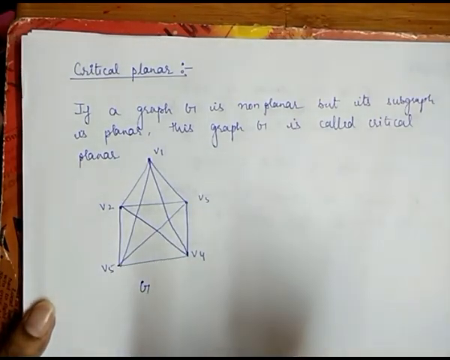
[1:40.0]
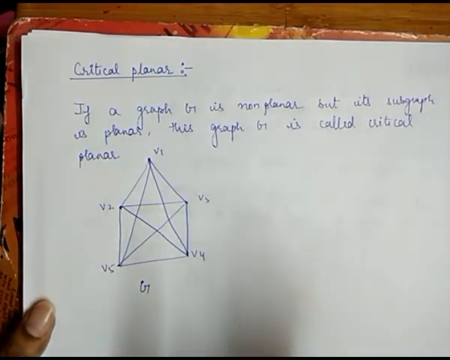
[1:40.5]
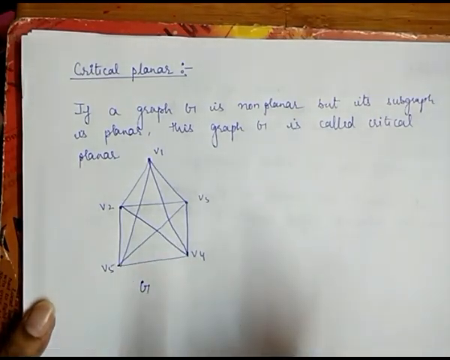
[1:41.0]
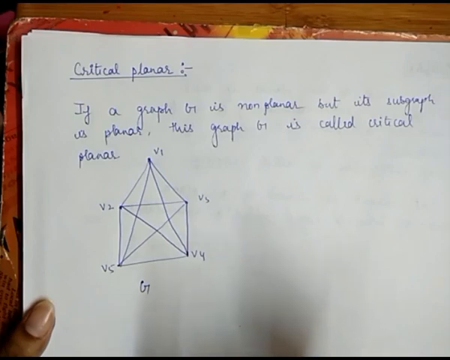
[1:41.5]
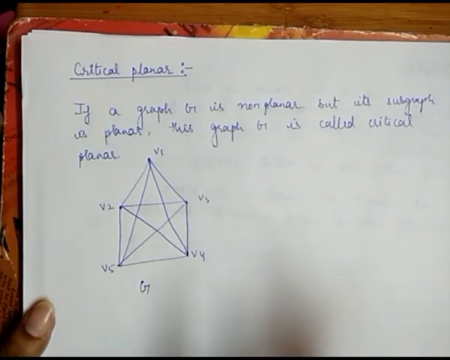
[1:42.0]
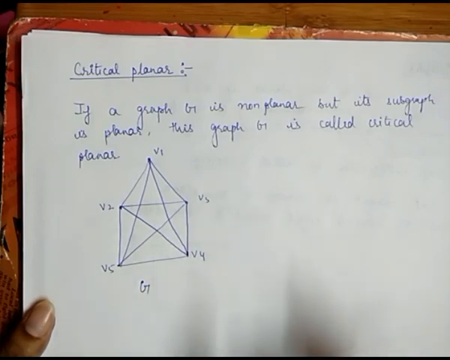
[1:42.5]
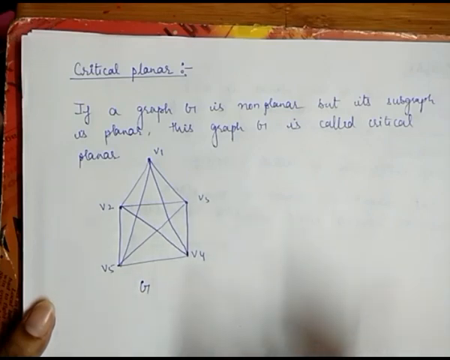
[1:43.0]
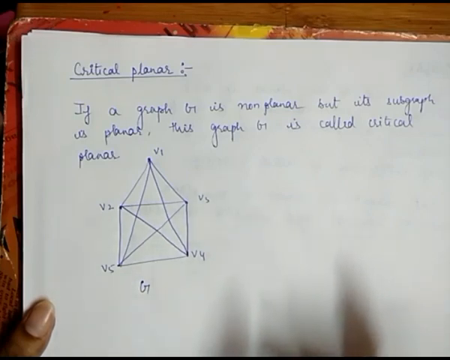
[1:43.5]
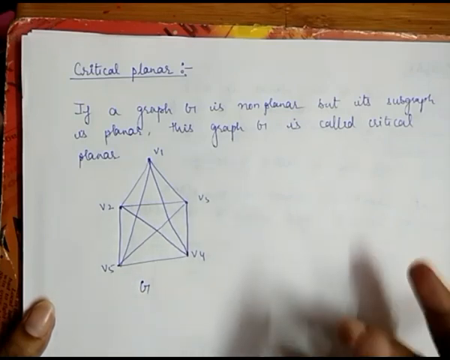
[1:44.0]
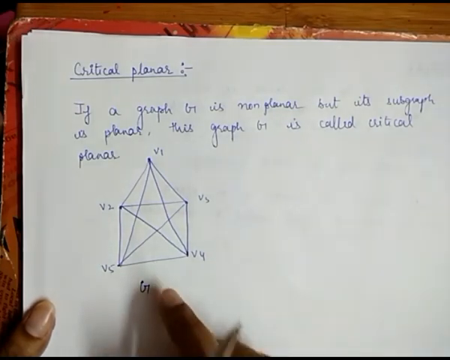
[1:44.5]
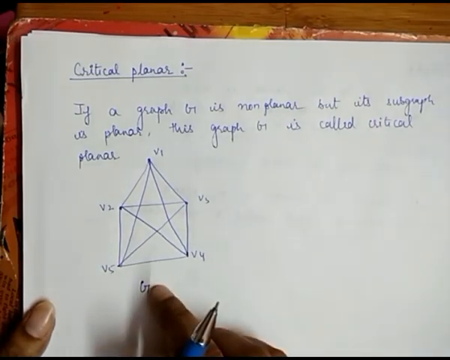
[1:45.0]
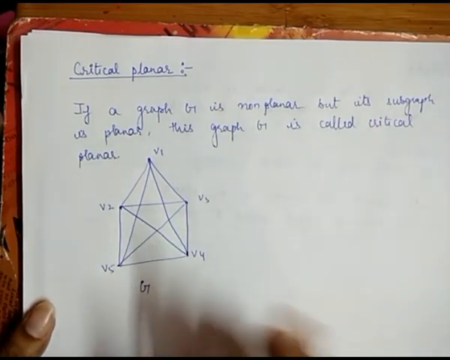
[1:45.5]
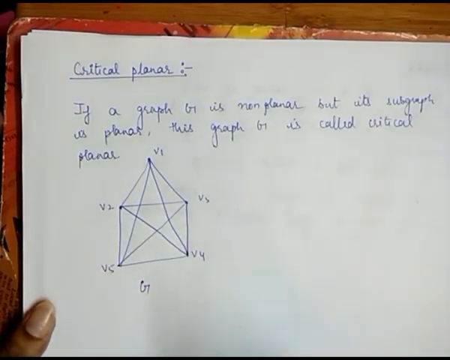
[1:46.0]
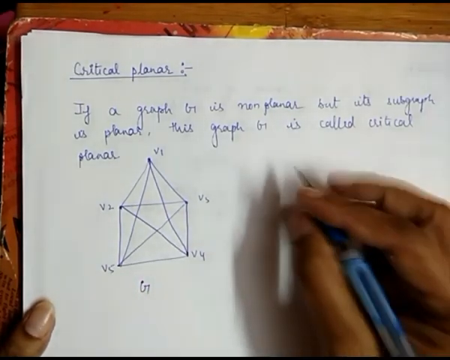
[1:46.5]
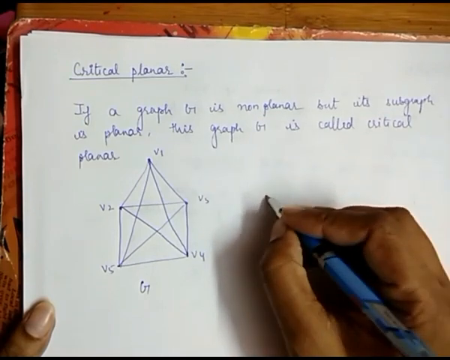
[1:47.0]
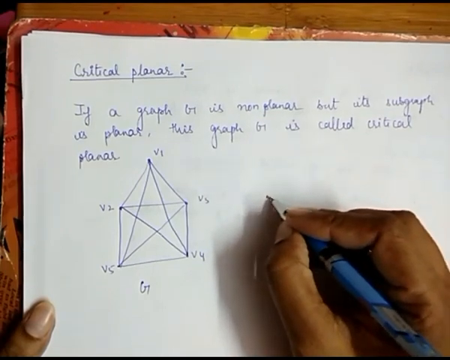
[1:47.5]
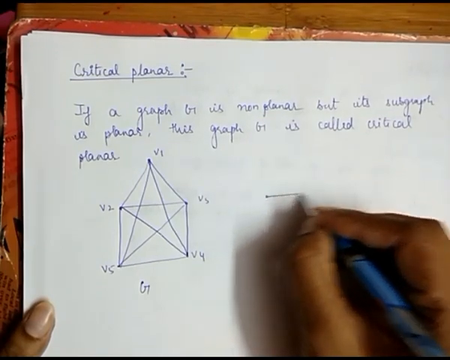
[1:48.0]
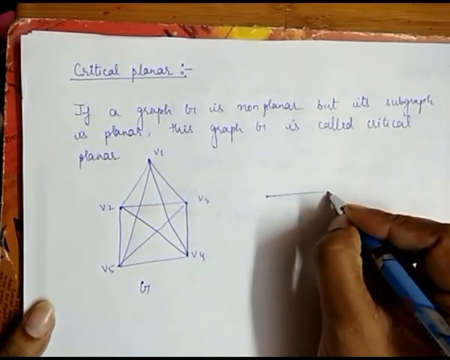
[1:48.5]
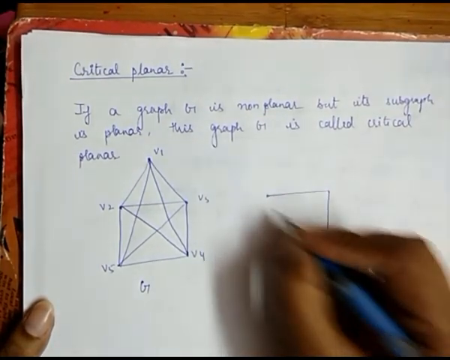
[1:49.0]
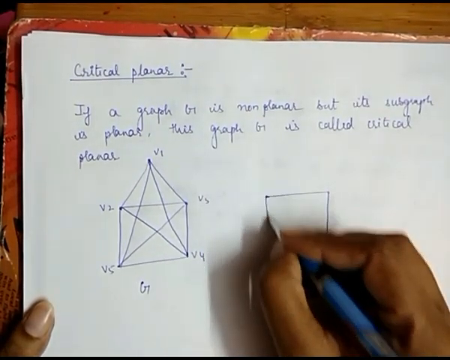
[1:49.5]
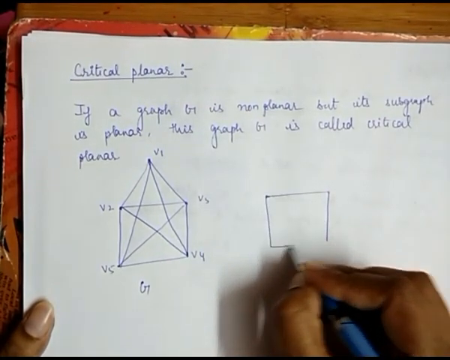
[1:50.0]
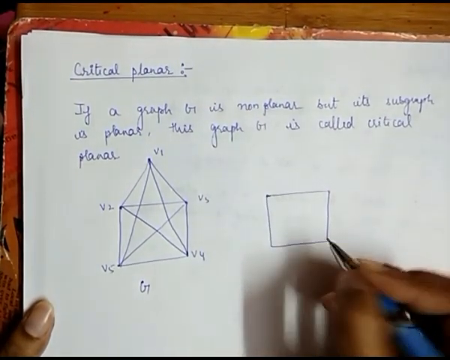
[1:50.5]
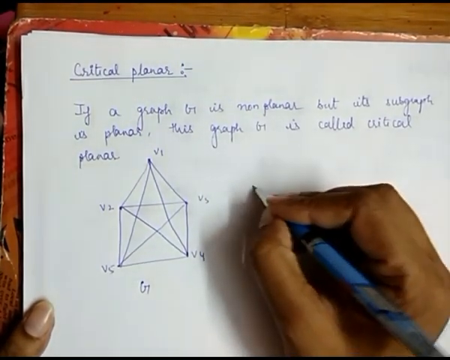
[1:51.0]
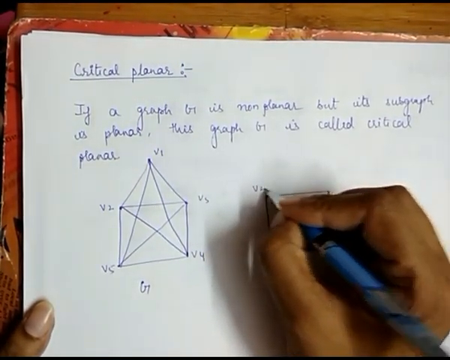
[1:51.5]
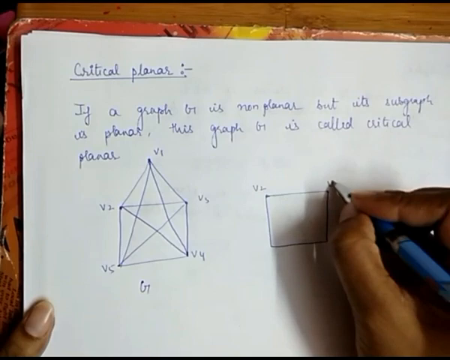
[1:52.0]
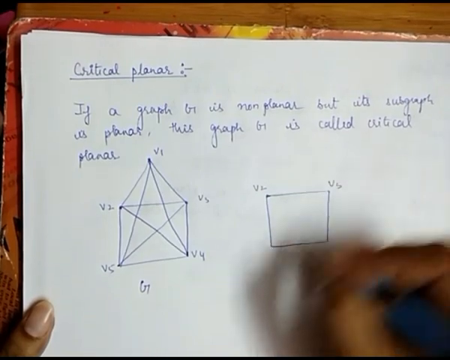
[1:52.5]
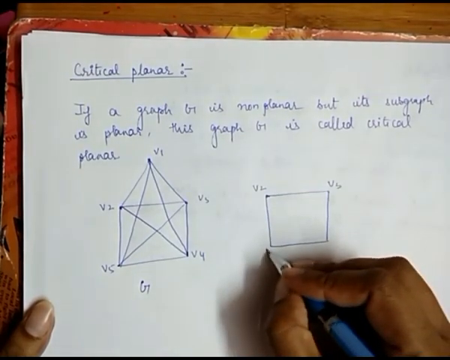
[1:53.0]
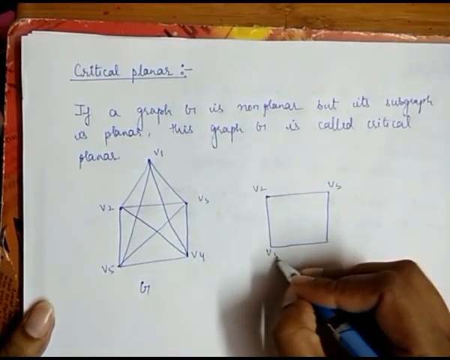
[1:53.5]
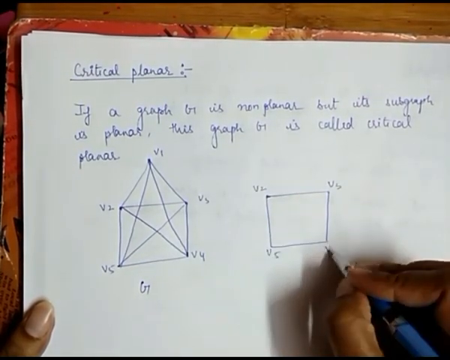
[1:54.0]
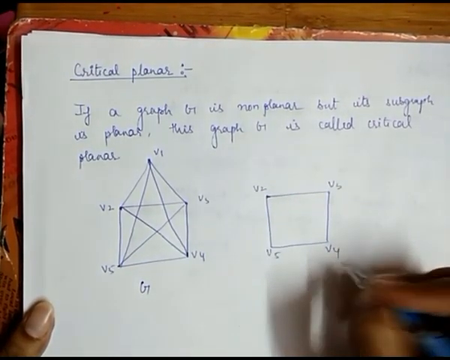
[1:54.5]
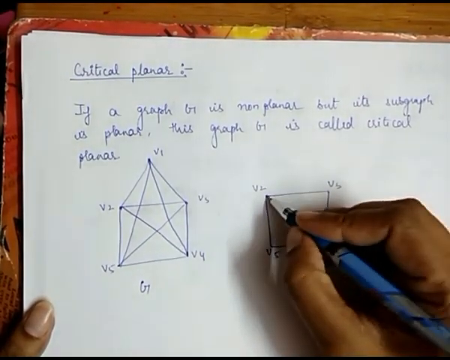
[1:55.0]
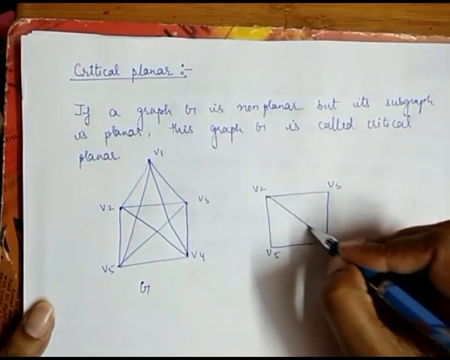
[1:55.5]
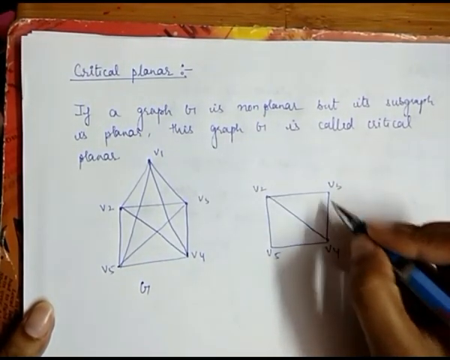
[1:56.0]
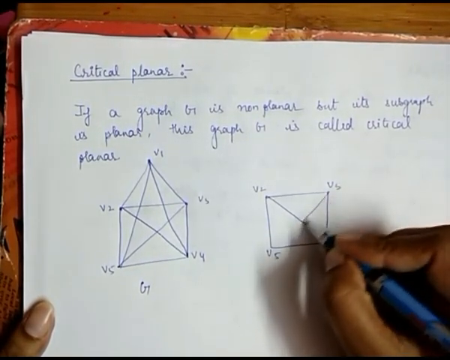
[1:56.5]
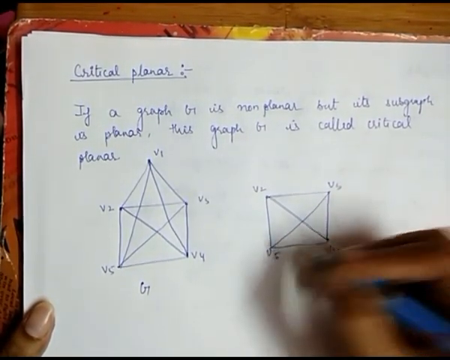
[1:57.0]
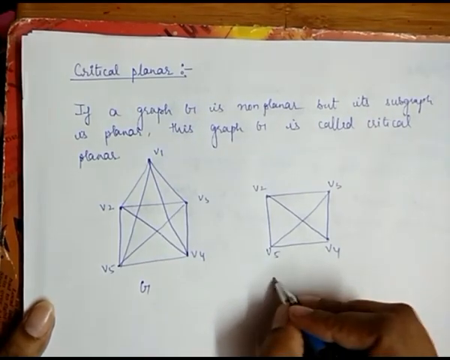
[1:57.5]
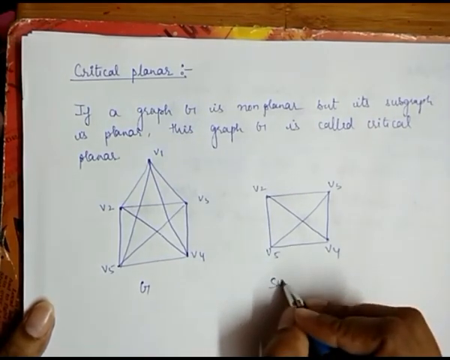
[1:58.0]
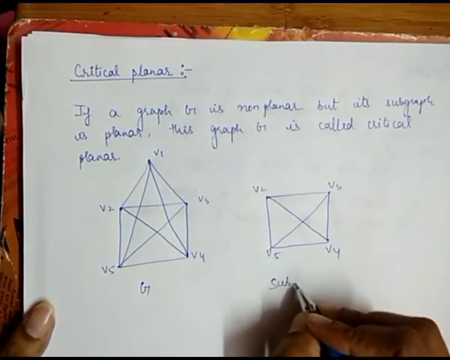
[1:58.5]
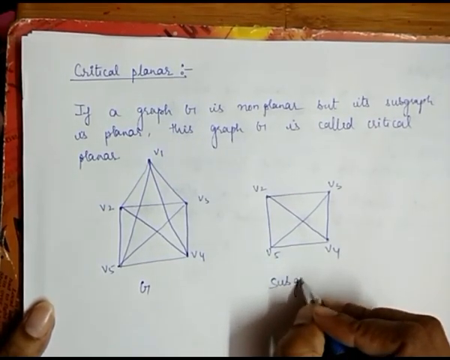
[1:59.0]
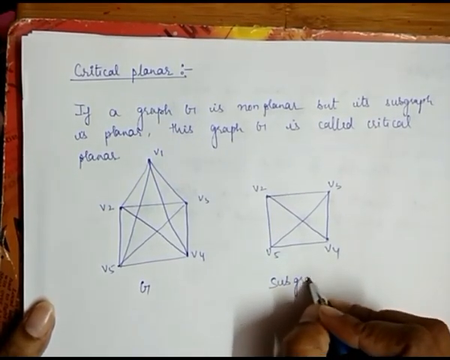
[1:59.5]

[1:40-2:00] The woman's right hand is off the paper, with only her left thumb holding it down, and the shadow of her right hand moves back and forth, from right to left, across the paper. Her hand with the tip of the pen comes back into the frame, and she points her right index finger at the letter G. She places the pen on the paper to the right of the shape she drew, level with the V2 and V5 points, and draws another square from the top left corner to the top right corner and down to the bottom right corner. She lifts the pen, starts at the top left corner, and draws a line to the bottom left and then over to the bottom right to complete the square. She labels its corners V2, V3, V4 and V5, creates an X in the middle by connecting V2 to V4 and then V3 to V5, and then labels it "subgraph".